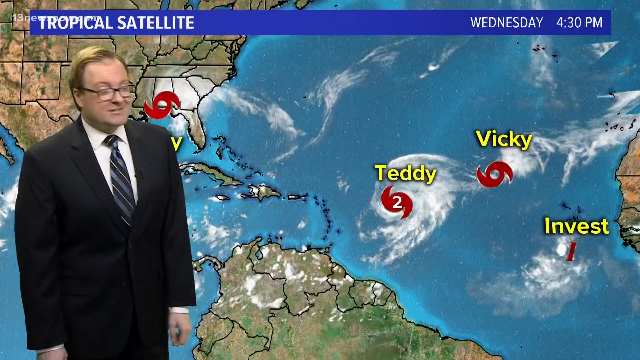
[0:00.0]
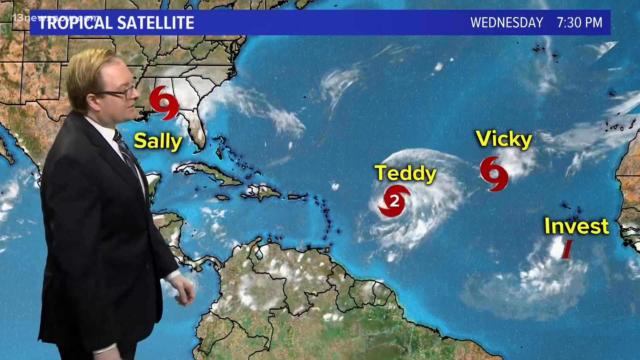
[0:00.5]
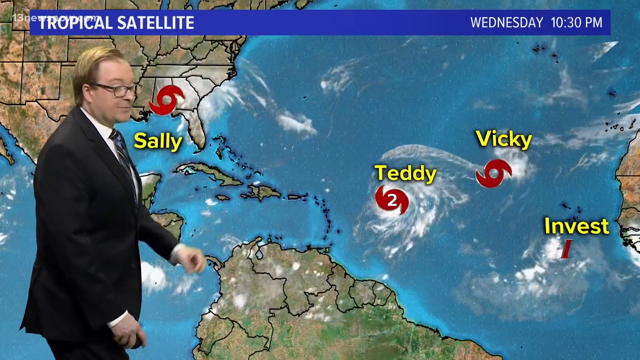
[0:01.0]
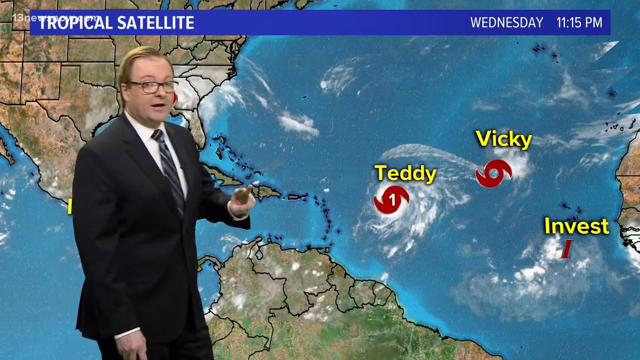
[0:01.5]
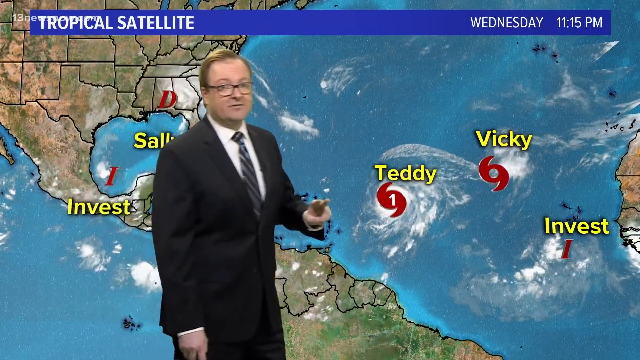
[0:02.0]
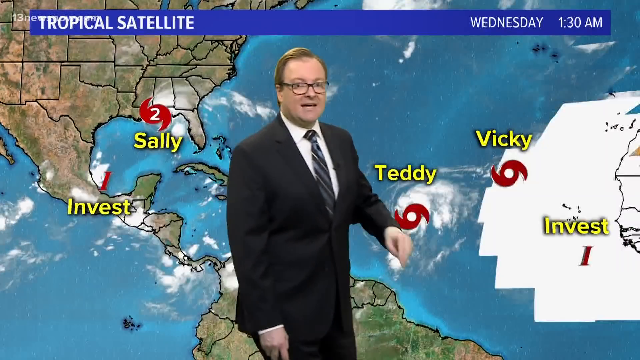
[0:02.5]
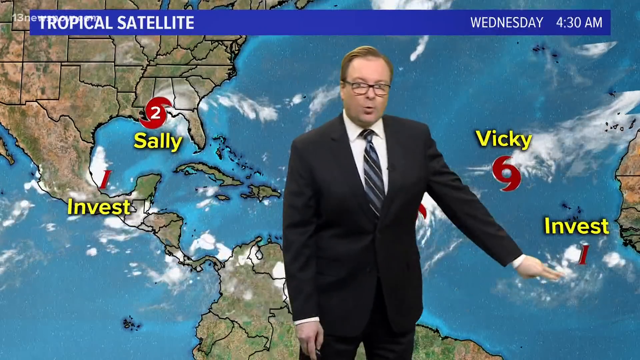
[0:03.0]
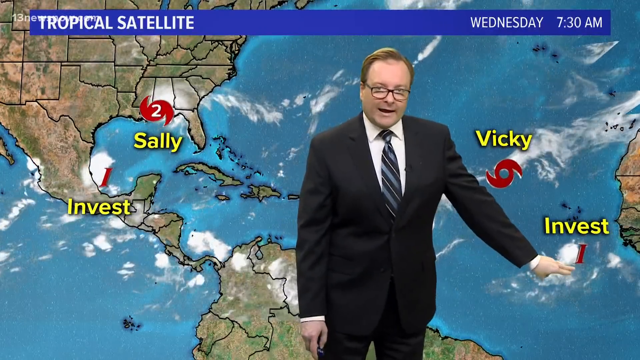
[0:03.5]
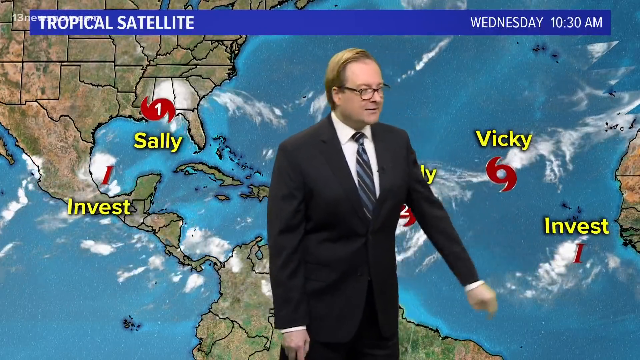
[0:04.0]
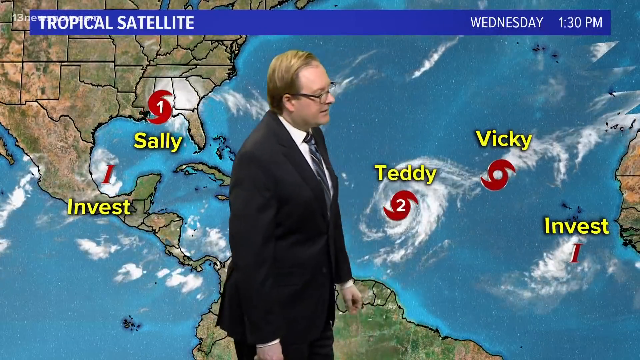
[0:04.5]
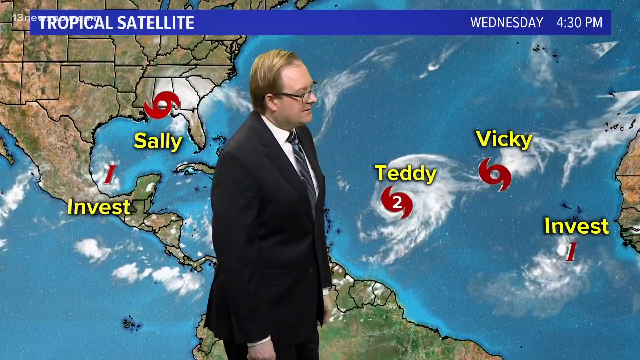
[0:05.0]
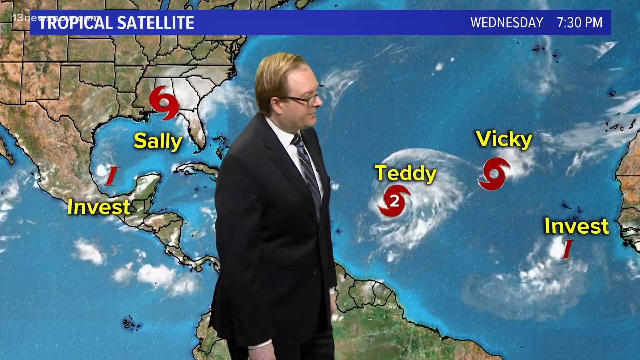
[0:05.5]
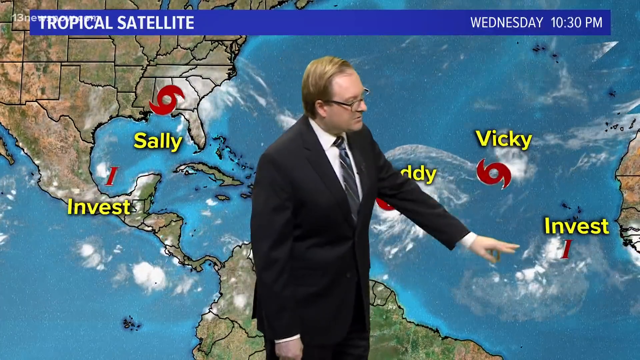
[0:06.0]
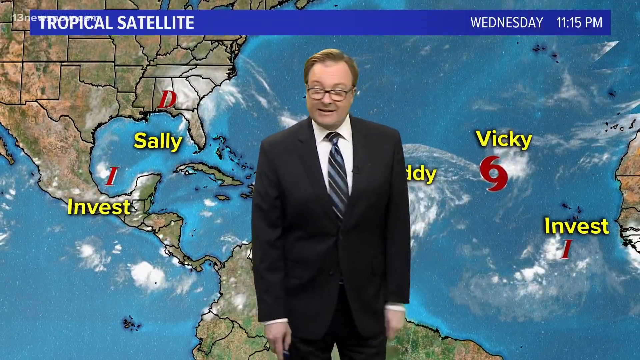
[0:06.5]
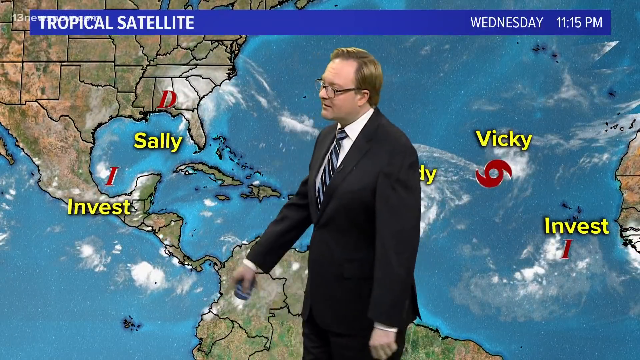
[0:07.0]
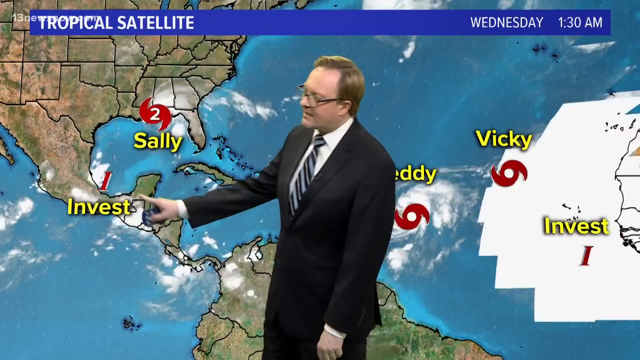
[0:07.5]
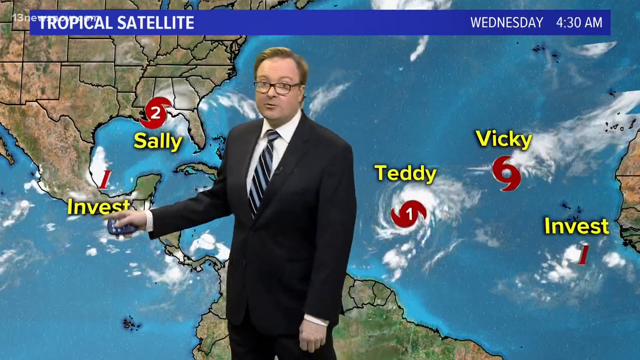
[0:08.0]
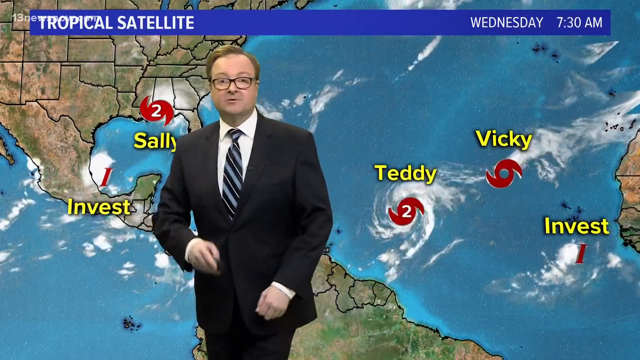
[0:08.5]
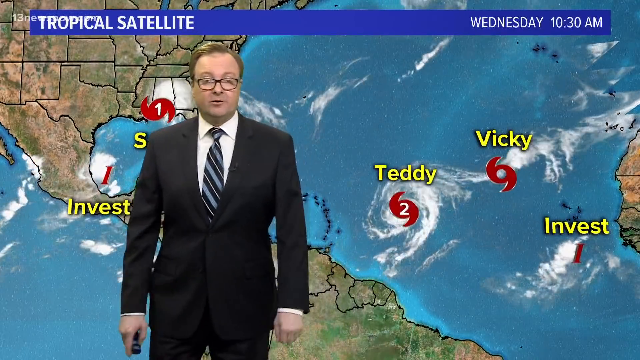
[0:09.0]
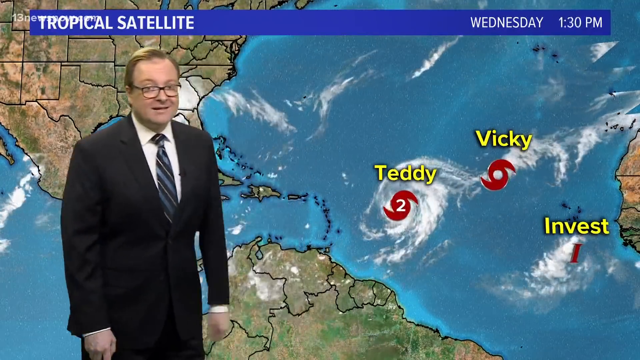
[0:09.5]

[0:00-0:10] A tall, elderly man with short hair, wearing eyeglasses, a black suit, a white shirt and a striped tie, seems to be presenting a weather report. On-screen information appears to read something like "tropical sunlight", along with the date and time, Wednesday, 4:30 p.m. He points at a map that shows places such as Vicky, Invest, Teddy and Sally. These areas appear to be water bodies, since something that looks like ocean waves is visible on them. The map also shows other areas in brown and a greenish colour, divided by black lines.